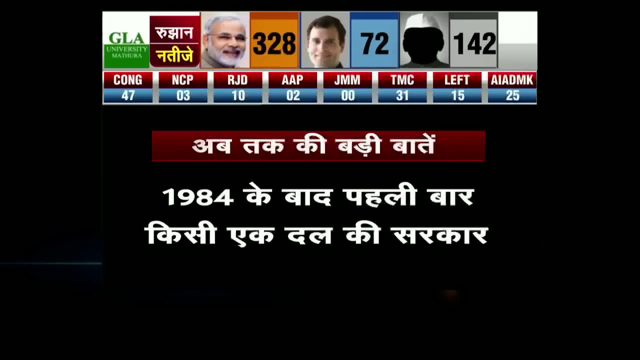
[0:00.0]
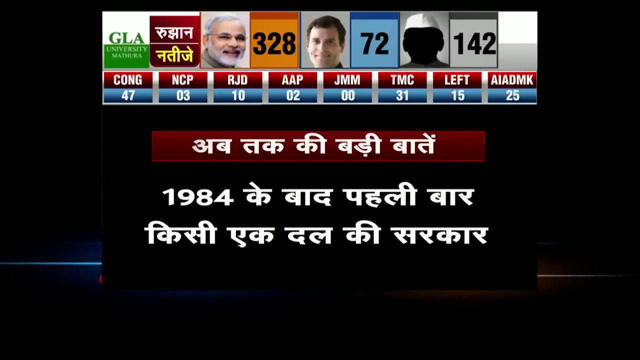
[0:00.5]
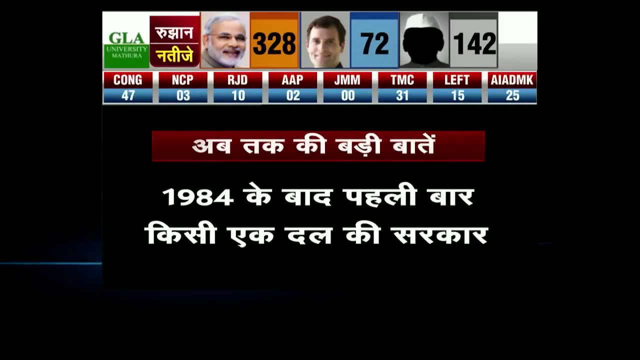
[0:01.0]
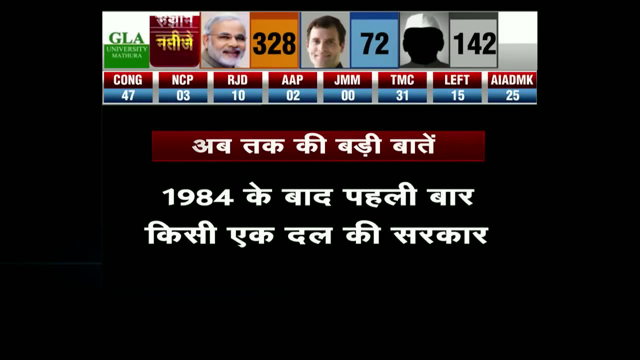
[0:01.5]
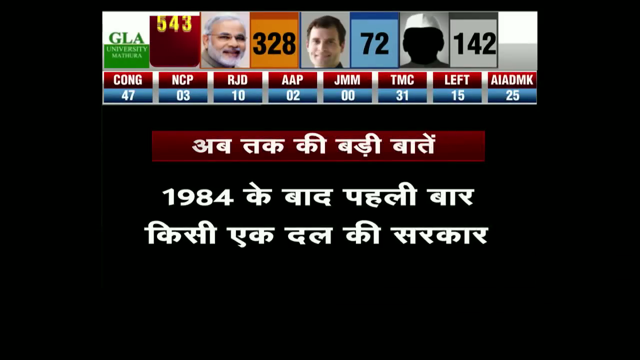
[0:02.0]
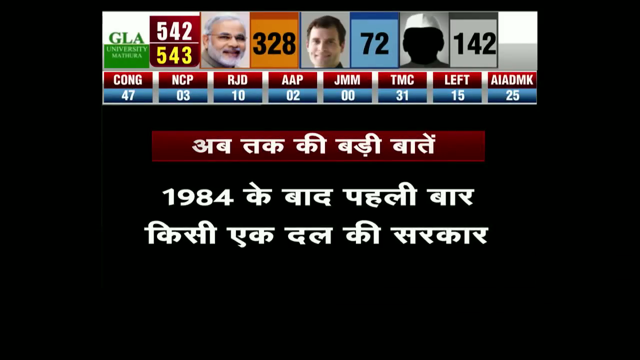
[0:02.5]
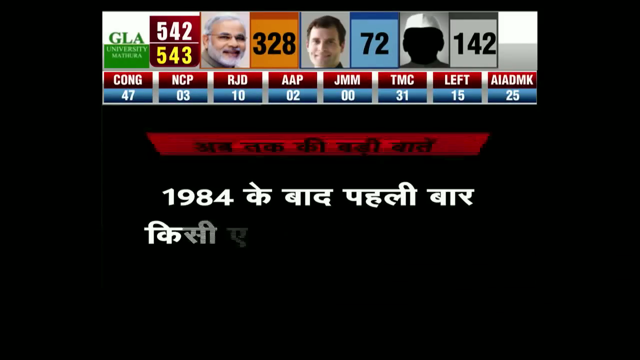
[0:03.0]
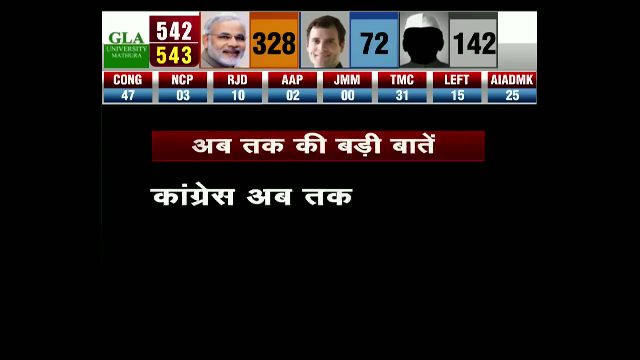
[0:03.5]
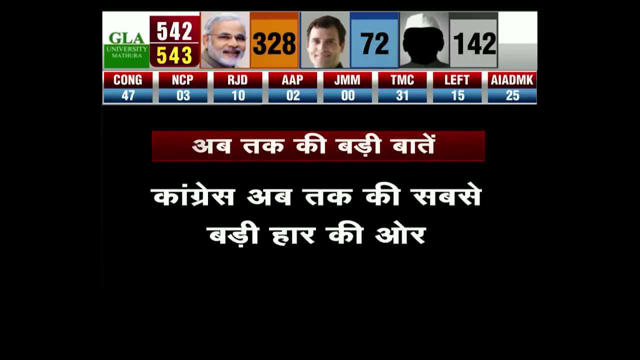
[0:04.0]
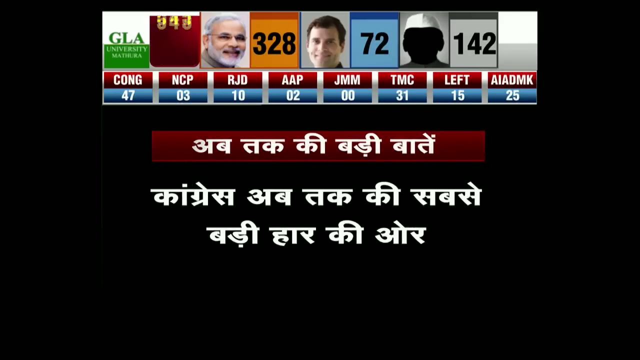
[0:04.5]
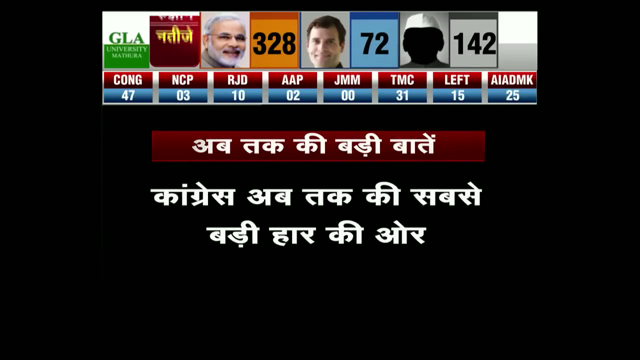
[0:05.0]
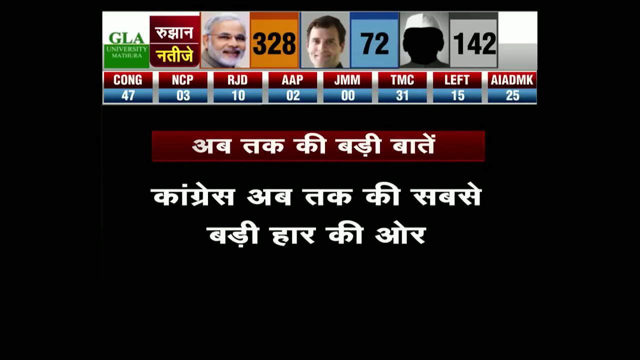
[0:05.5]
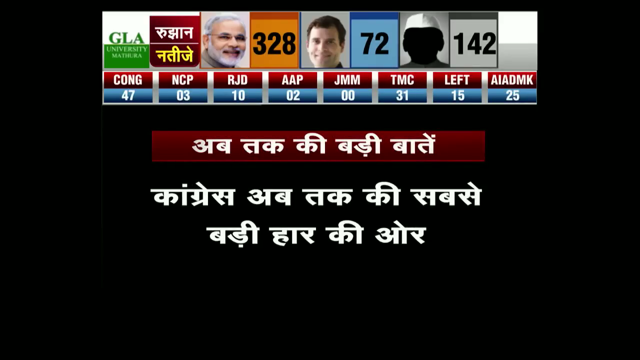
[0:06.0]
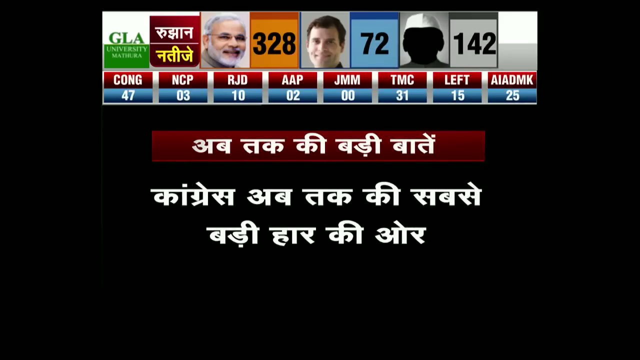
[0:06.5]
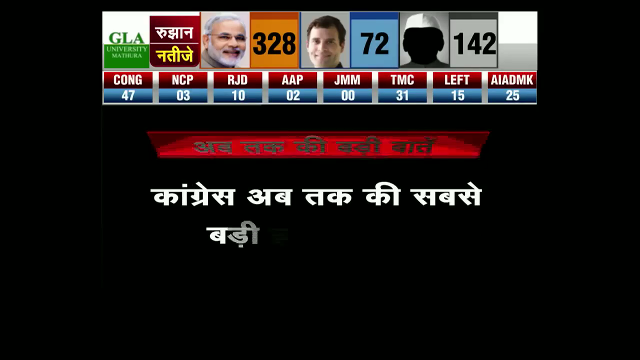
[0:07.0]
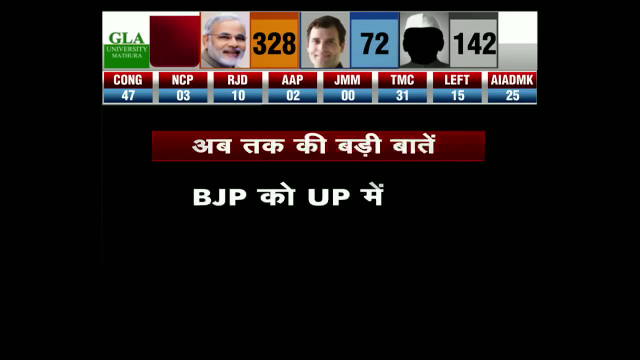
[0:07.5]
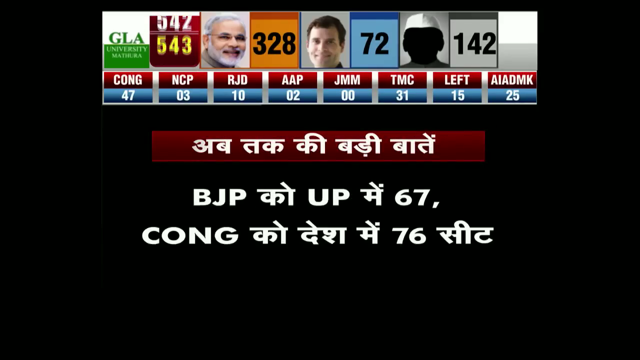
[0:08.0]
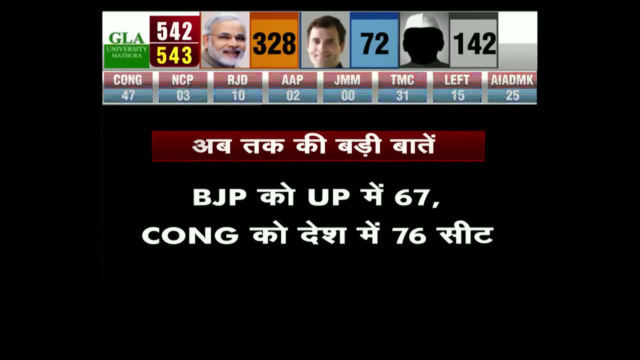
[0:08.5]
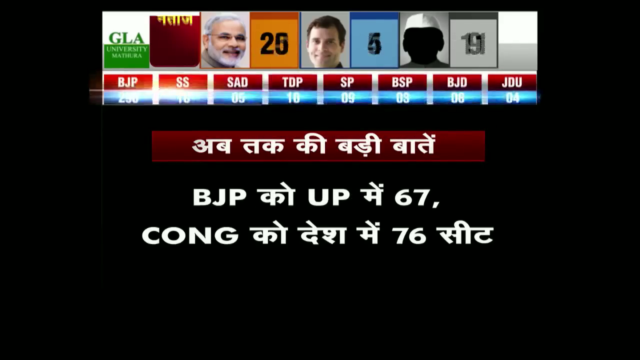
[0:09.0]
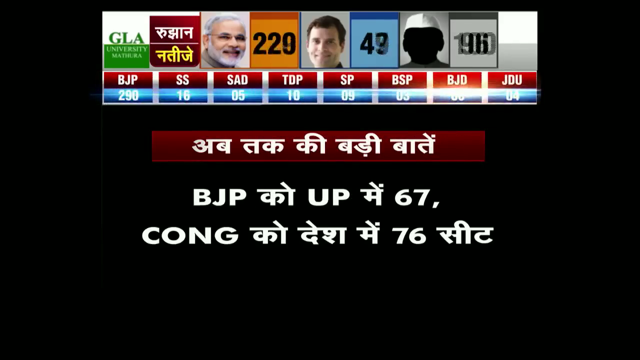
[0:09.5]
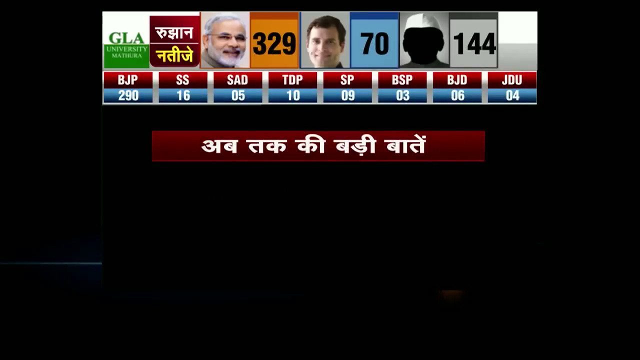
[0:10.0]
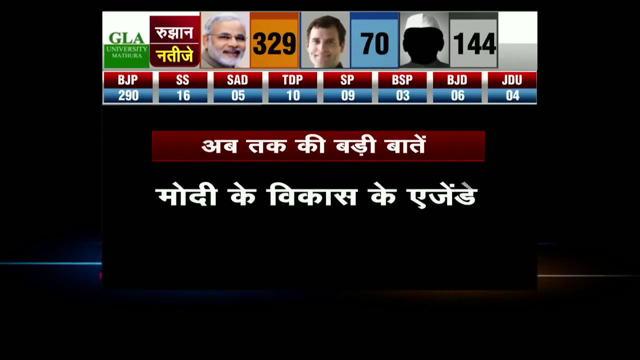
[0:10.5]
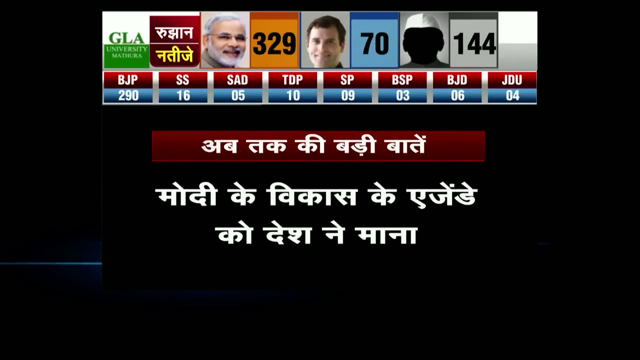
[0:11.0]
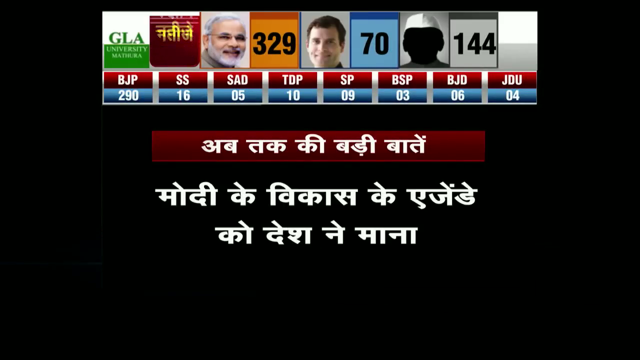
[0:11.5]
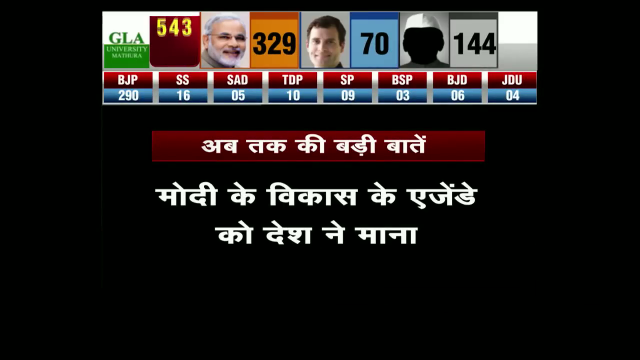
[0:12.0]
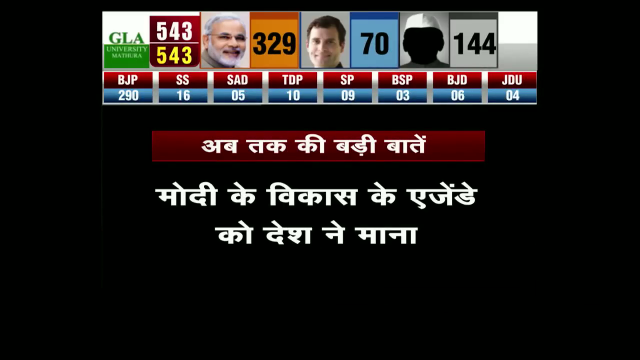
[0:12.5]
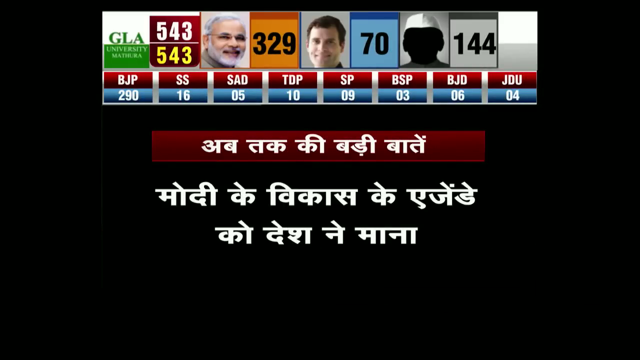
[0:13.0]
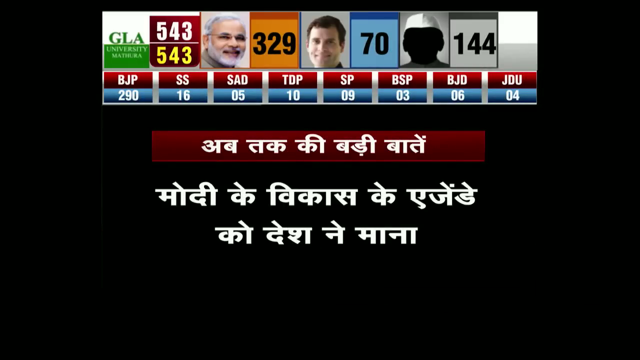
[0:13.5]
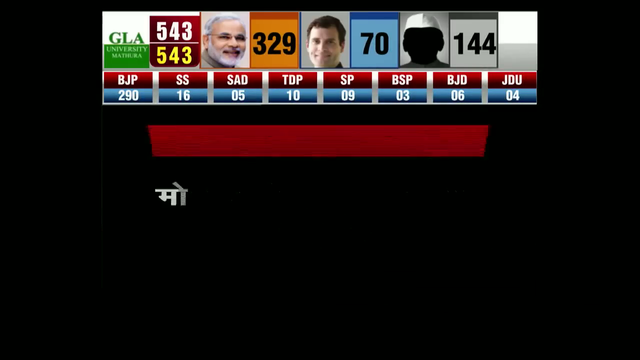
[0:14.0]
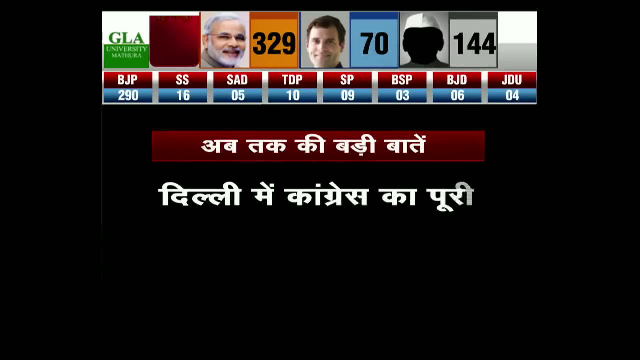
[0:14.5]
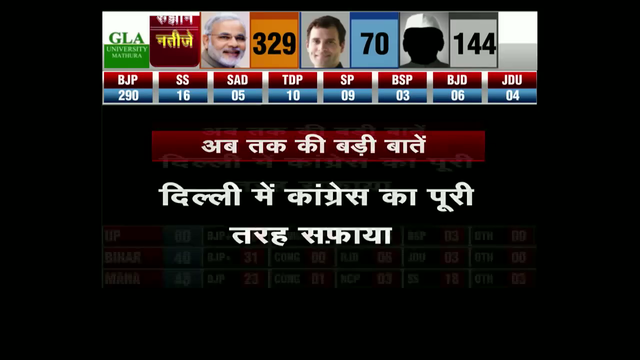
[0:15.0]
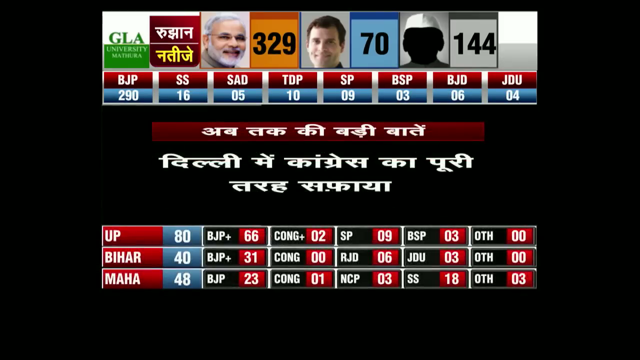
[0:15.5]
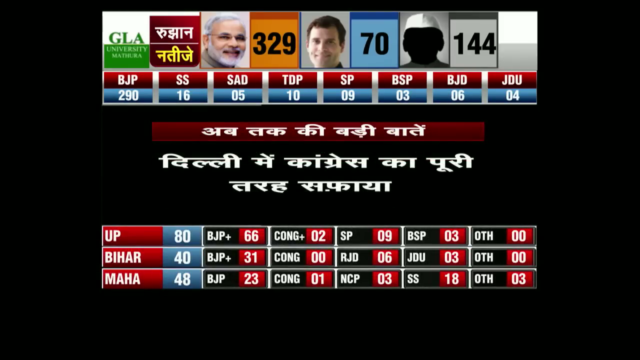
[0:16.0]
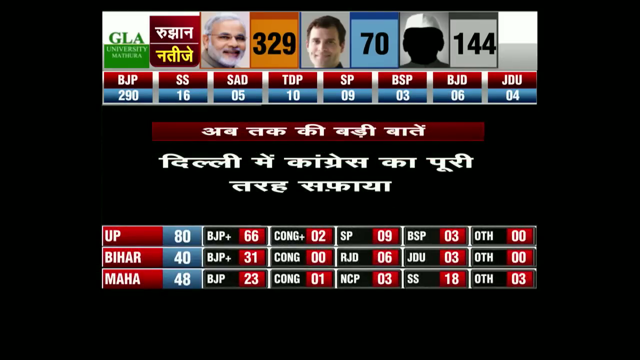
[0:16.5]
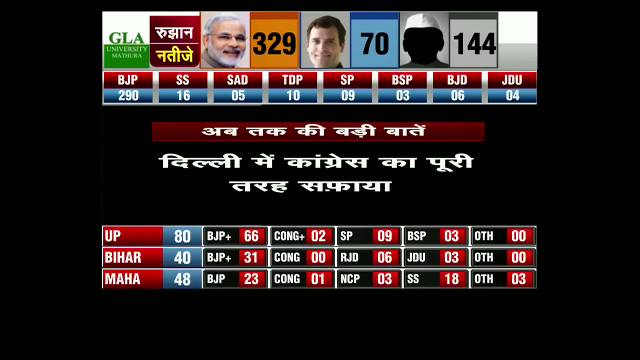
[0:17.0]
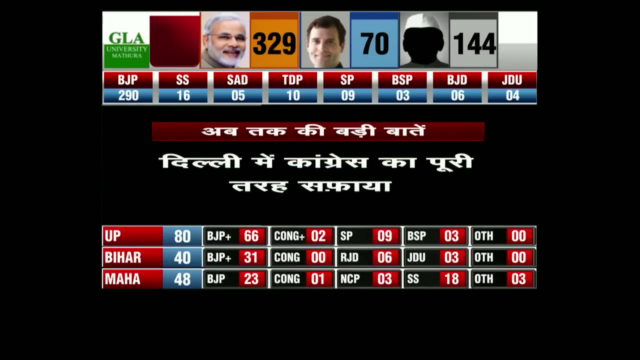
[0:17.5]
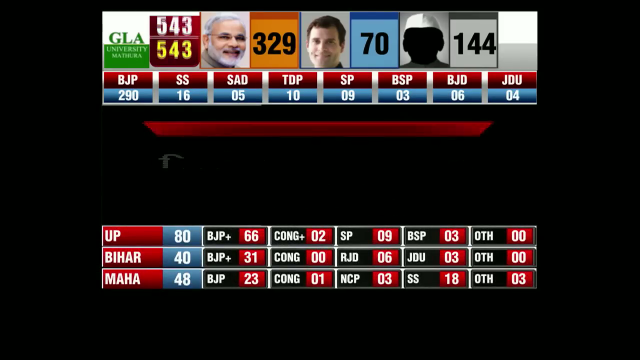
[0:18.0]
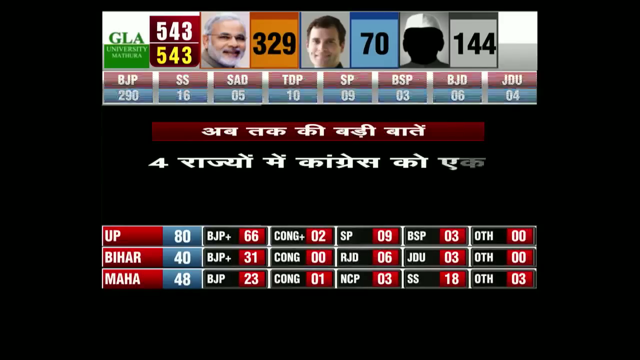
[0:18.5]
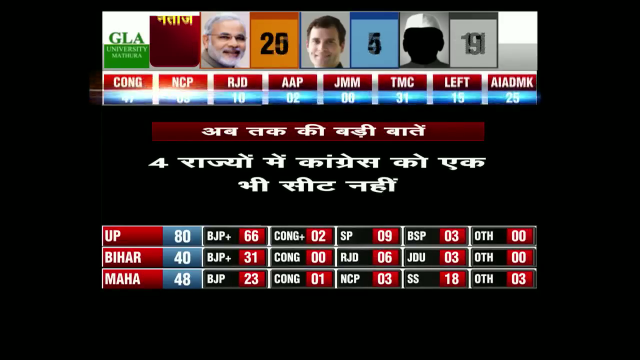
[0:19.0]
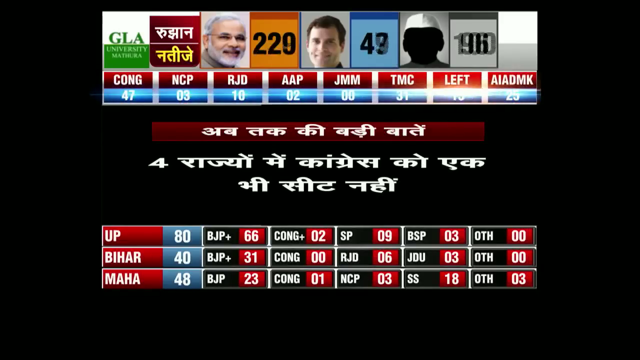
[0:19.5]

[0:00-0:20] Three different candidates are shown in what looks like an election. One is an image of a white Indian man with gray hair, with a score of 322, 328. Another man has a score of 72, and an image without a picture has a score of 142. There are write-ups on screen. A chart lists "up", "Bihar" and "Maha", with different numbers along the side; in blue there are 80, 40 and 48. The numbers change drastically, apparently because voting is ongoing, and it seems people are selecting their candidates.